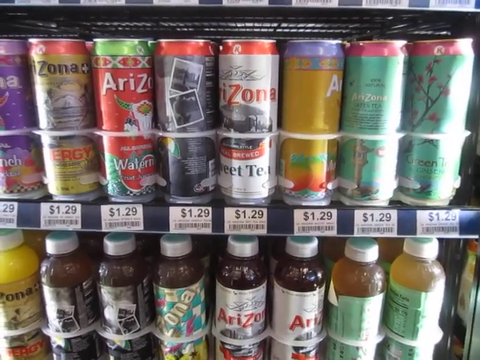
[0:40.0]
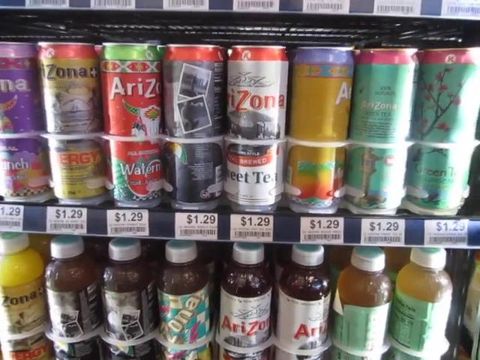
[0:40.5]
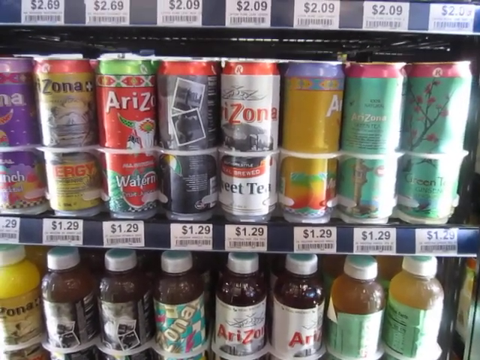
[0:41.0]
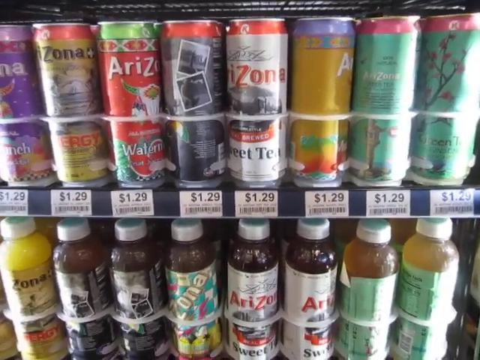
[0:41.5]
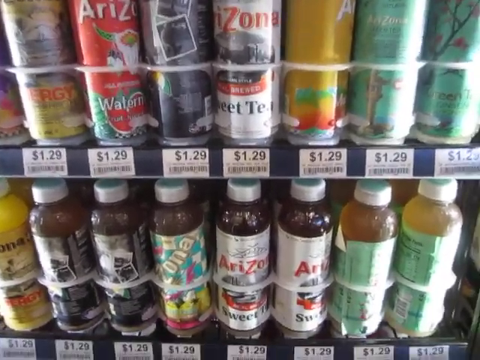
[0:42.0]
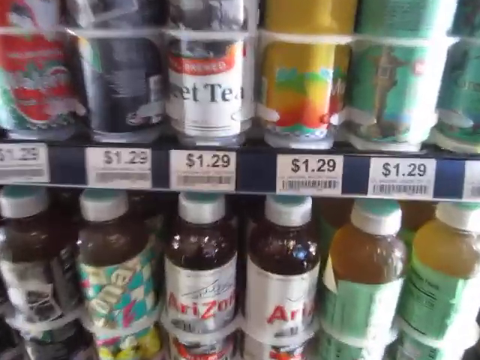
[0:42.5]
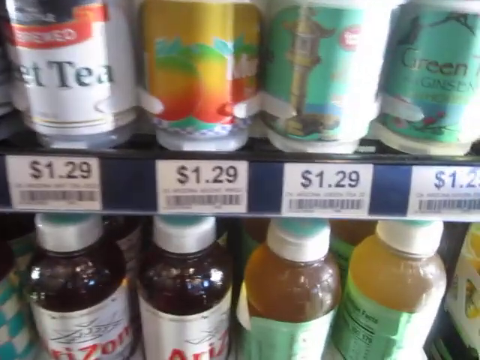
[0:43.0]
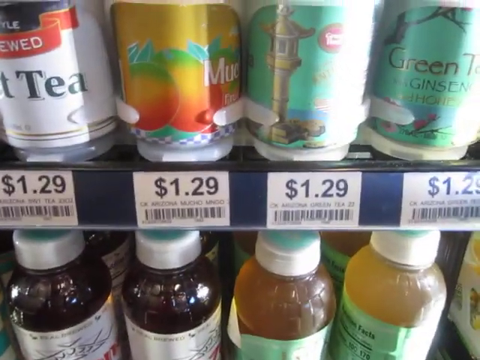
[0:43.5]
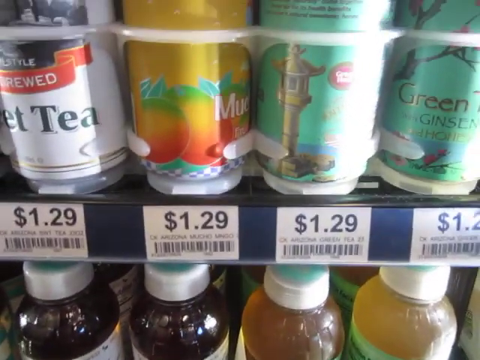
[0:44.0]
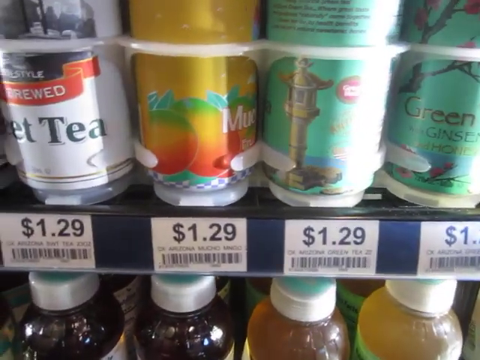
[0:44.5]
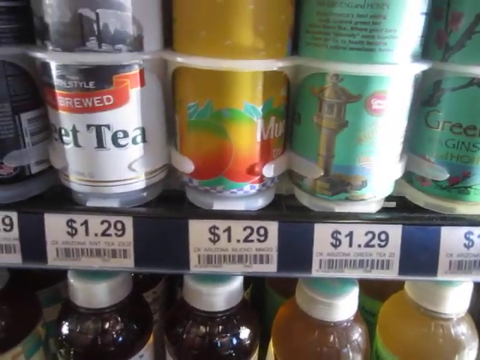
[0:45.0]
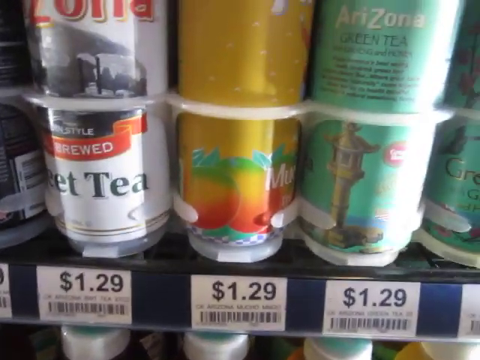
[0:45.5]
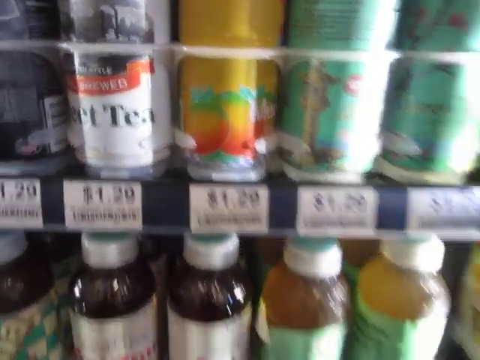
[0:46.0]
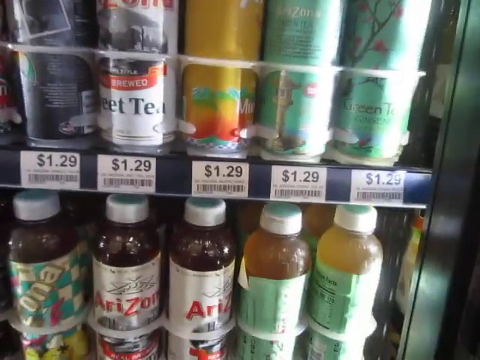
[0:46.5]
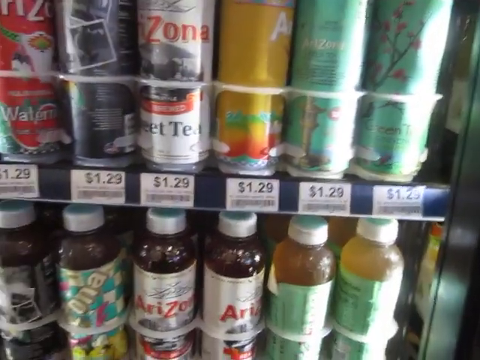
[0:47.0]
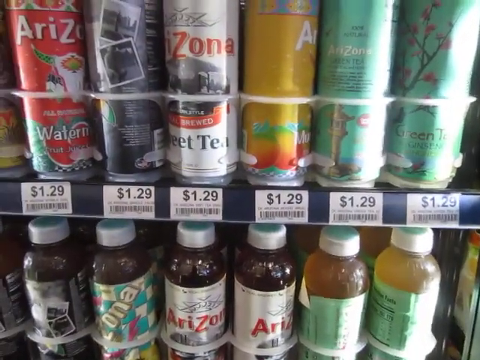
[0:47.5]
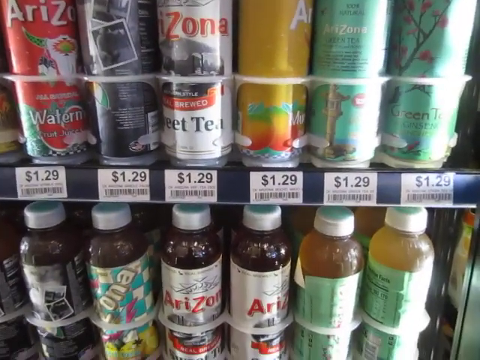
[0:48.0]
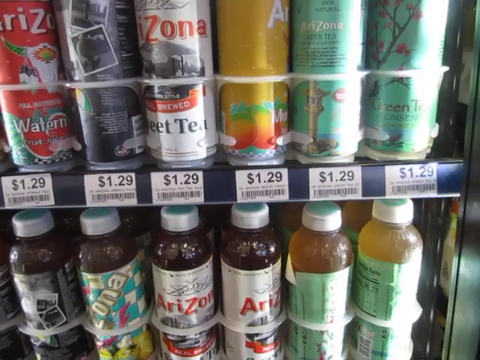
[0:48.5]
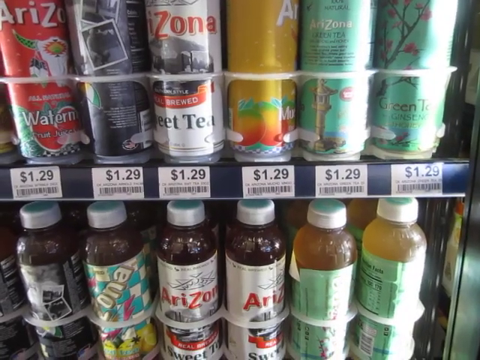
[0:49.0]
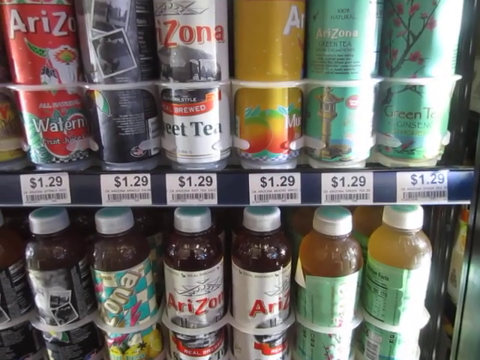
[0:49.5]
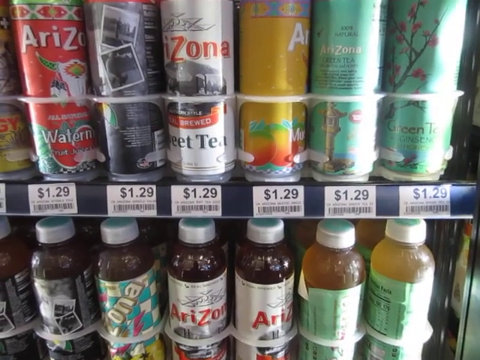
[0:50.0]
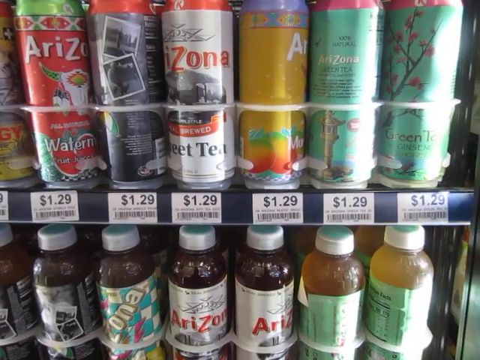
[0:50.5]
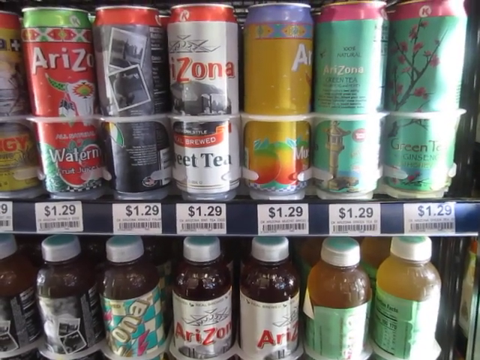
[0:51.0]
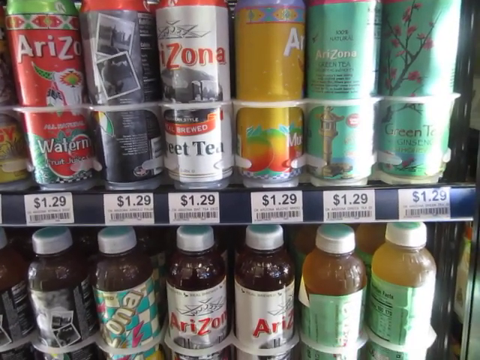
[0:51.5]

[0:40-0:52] The Arizona Iced Tea is still in view as he zooms in on the bottles and presumably the price. The same white plastic barriers are on the shelves. Circle K logos are atop the aluminum cans of Arizona Iced Tea, marking this as a Circle K refrigerator. Each aluminum can is priced at $1.29, shown by a white price tag underneath each can. The refrigerator casing is black, and the shelving is black. Above is a row of $2.09 teas, whose brand cannot be seen because they are cut off by the camera. On the bottom shelf is more Arizona Iced Tea in plastic bottles.